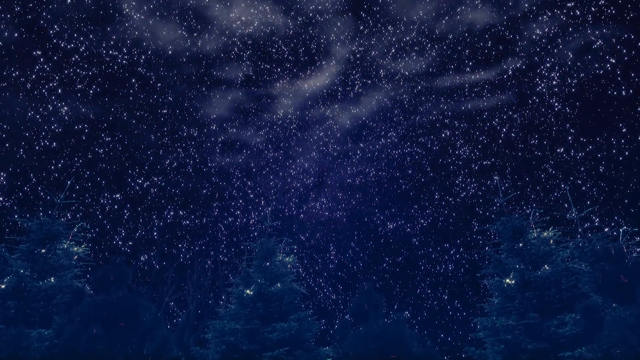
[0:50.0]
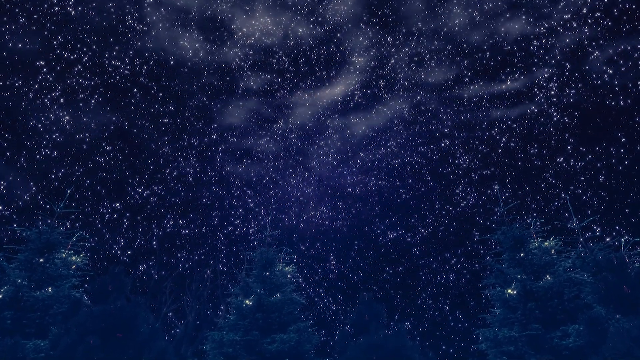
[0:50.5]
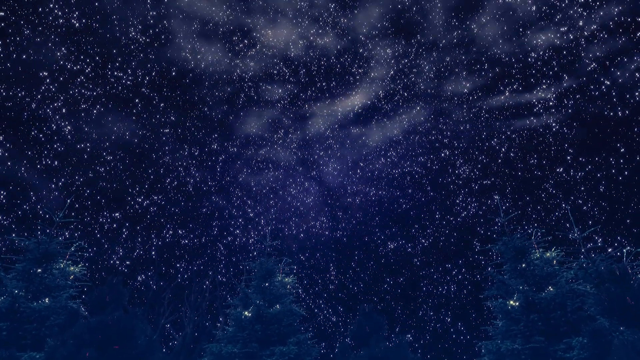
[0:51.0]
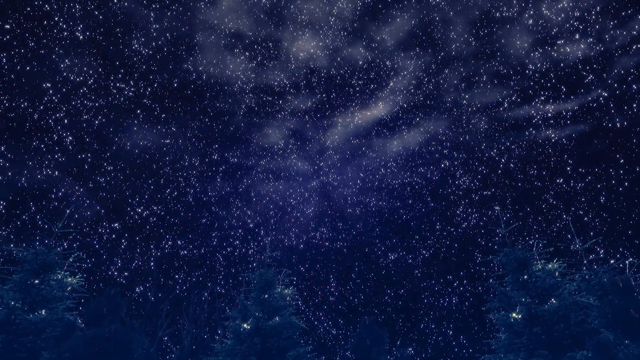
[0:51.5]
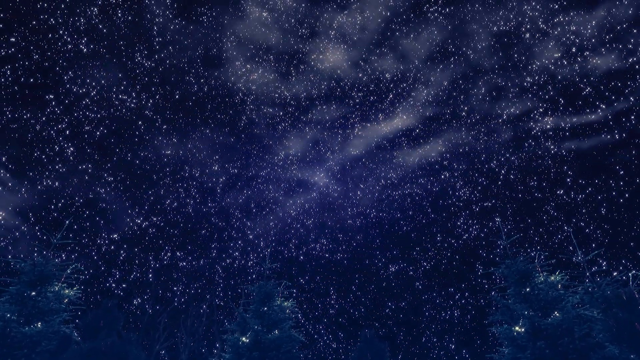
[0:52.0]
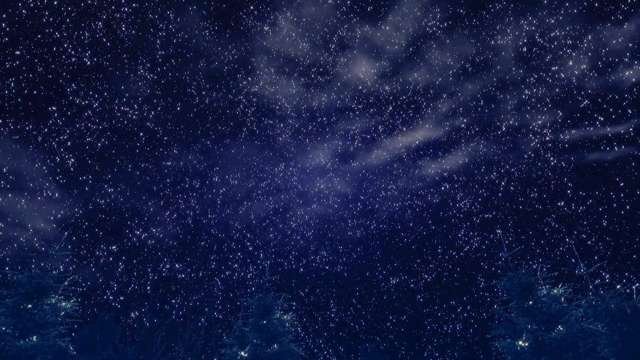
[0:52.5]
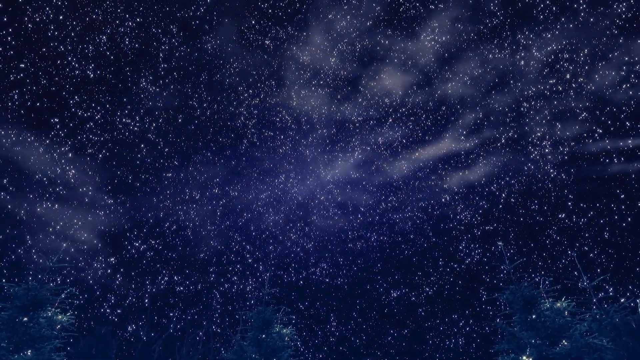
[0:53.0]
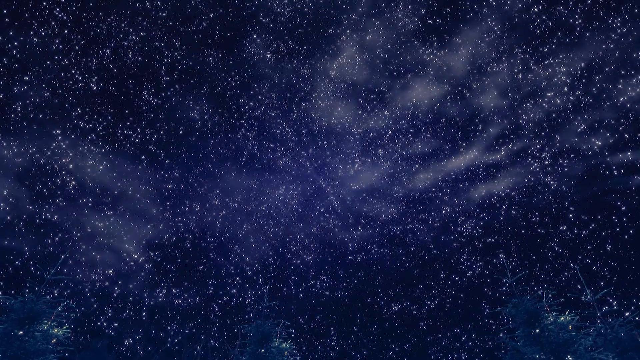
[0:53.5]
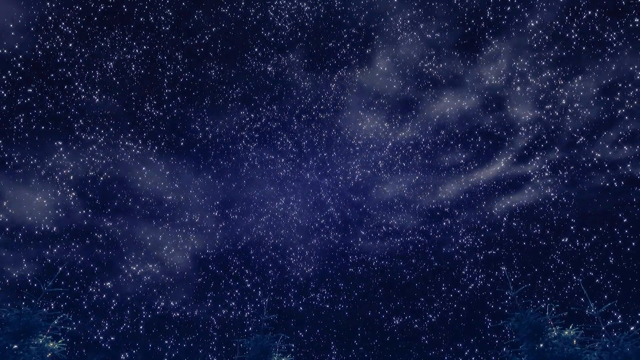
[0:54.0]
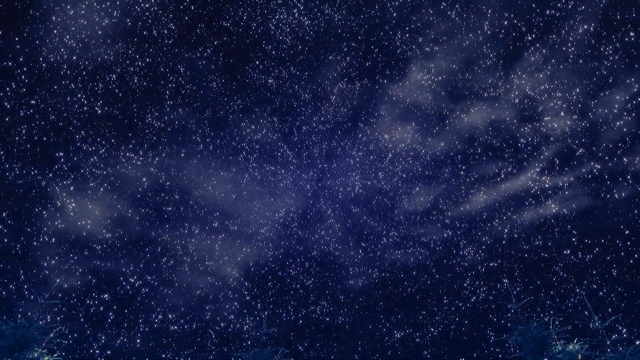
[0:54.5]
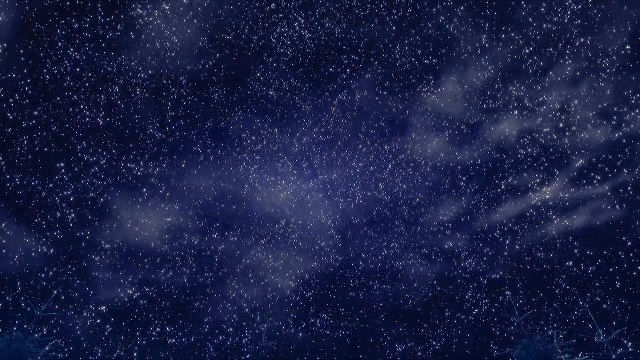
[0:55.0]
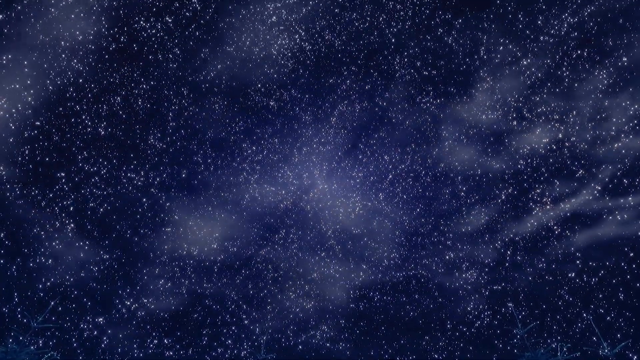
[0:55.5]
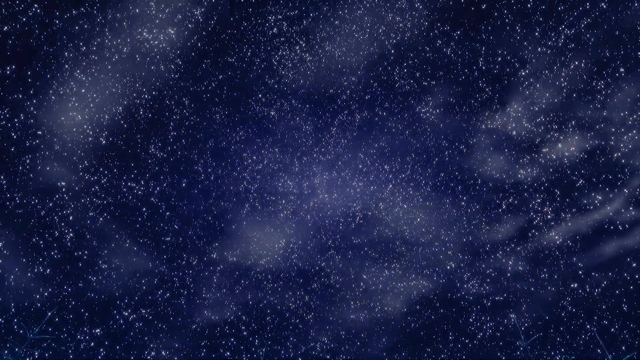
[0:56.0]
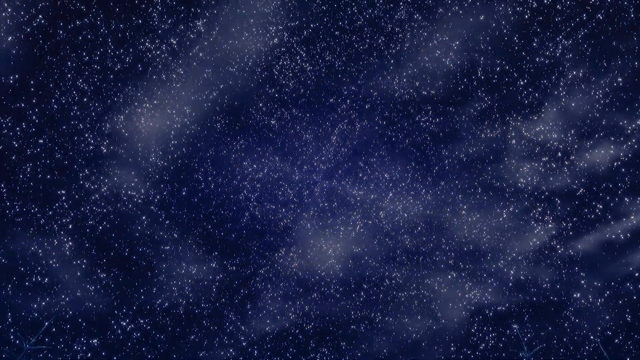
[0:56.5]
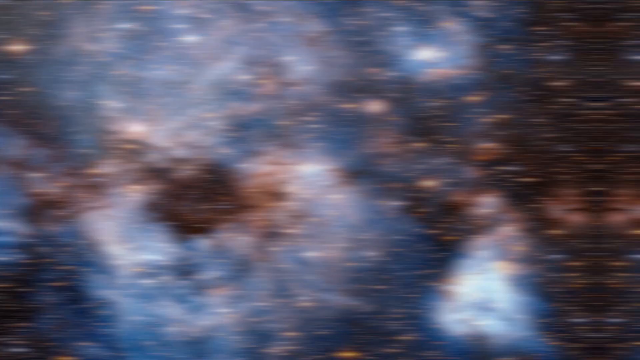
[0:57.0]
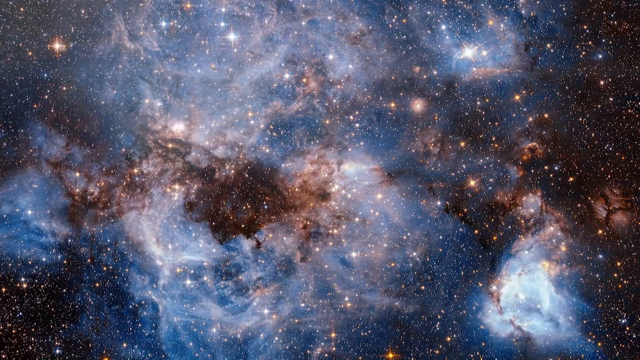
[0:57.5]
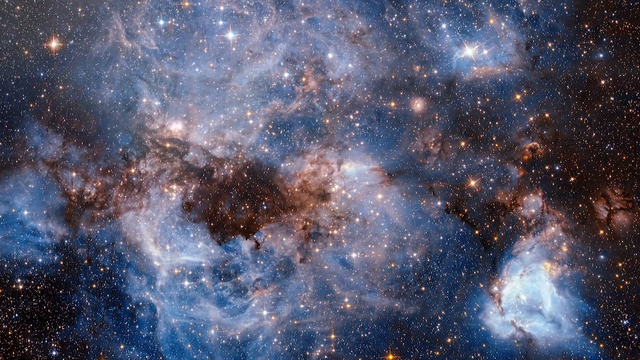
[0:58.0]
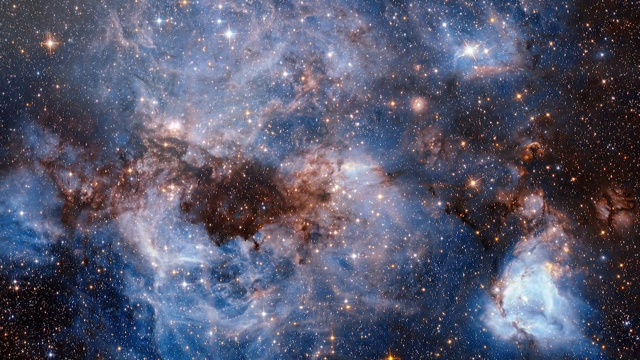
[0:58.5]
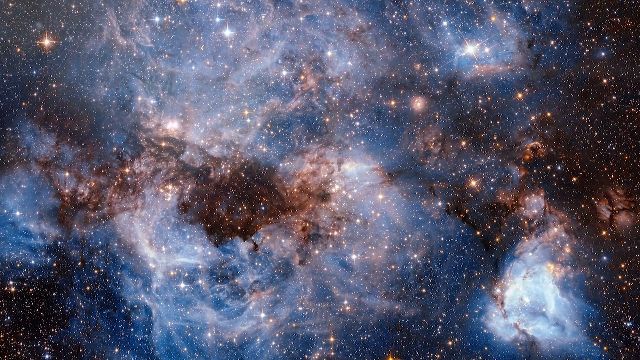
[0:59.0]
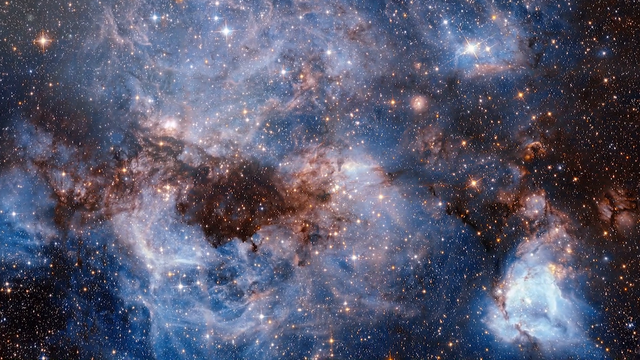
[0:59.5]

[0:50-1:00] The blue cobalt sky appears with swirling white clouds and white stars all over it. It then switches to a similar screen, but instead of blue it is more of a baby blue color, surrounded by many small bronze, white, and gold stars. It looks like a classic nebula spread all over the image, with almost thousands of stars. It has pieces of brown, white, and blue, almost like marble, the colors flowing into each other like looking into a glass marble; it almost looks like a geode. The image of deep space shows what is perhaps a large galaxy or solar system.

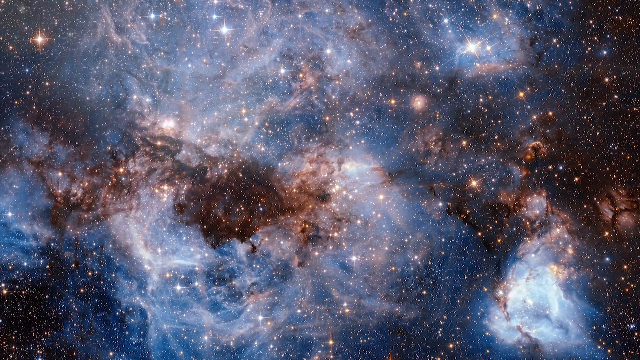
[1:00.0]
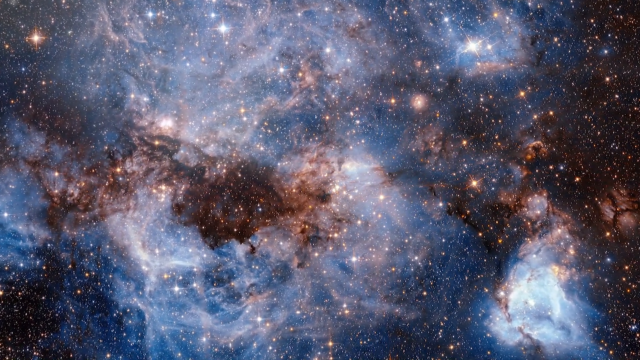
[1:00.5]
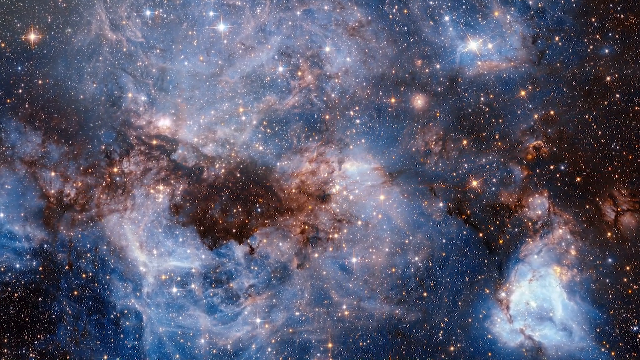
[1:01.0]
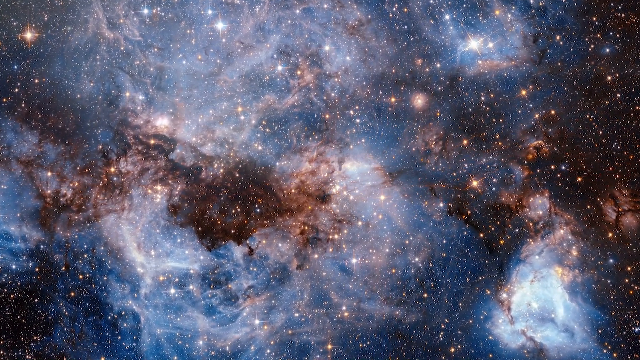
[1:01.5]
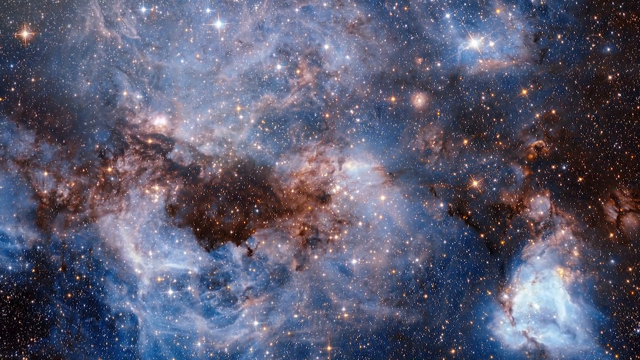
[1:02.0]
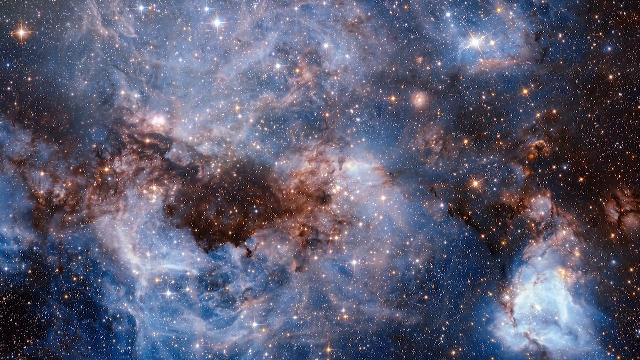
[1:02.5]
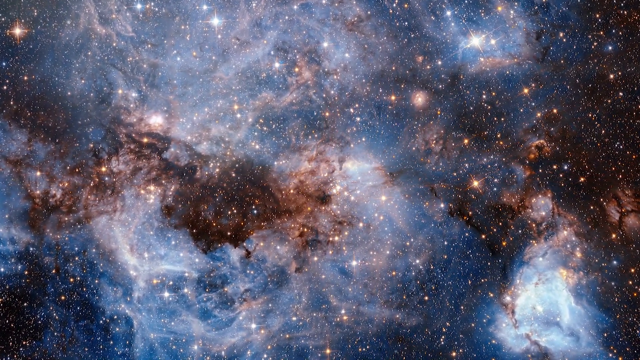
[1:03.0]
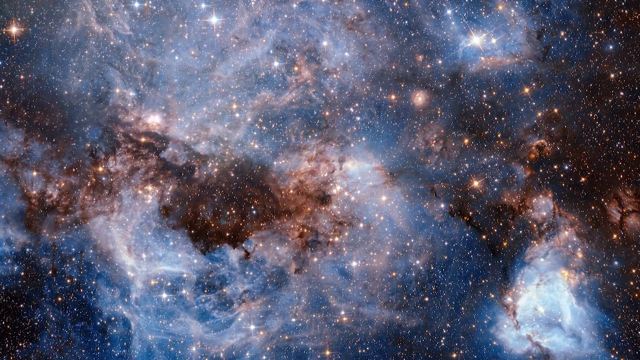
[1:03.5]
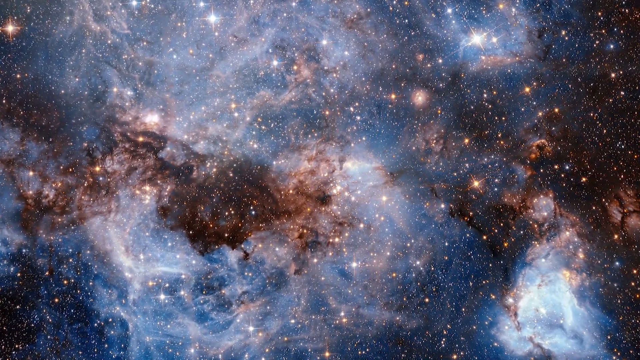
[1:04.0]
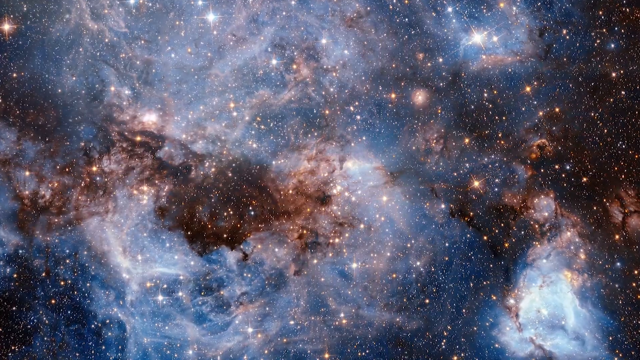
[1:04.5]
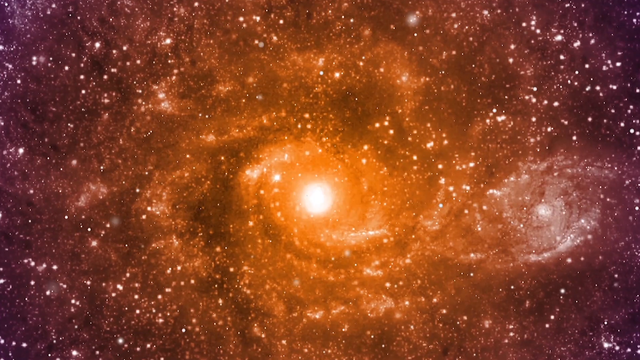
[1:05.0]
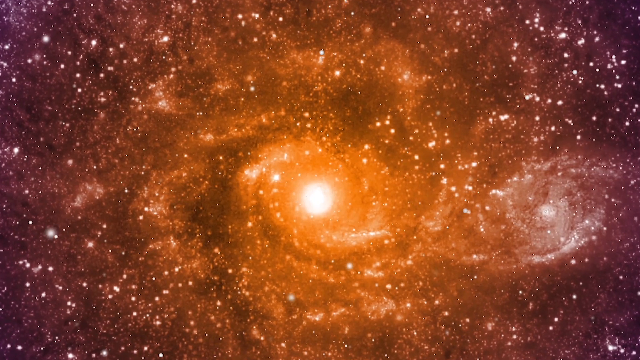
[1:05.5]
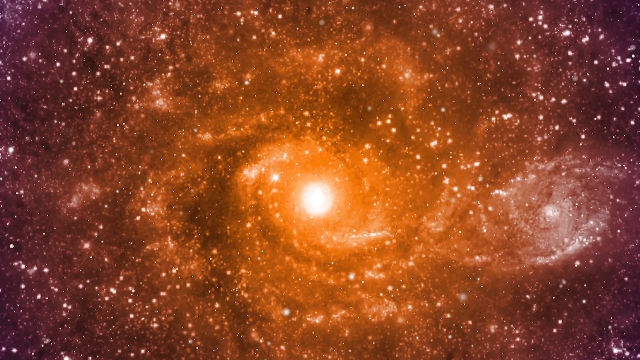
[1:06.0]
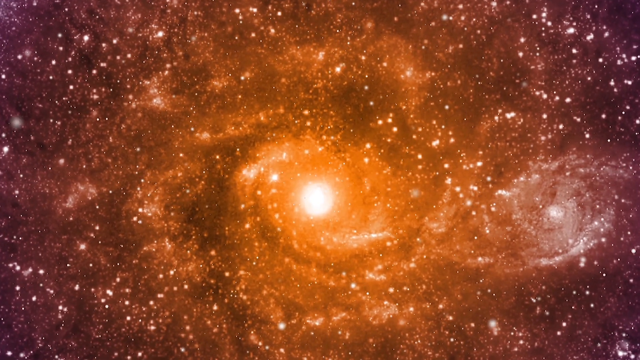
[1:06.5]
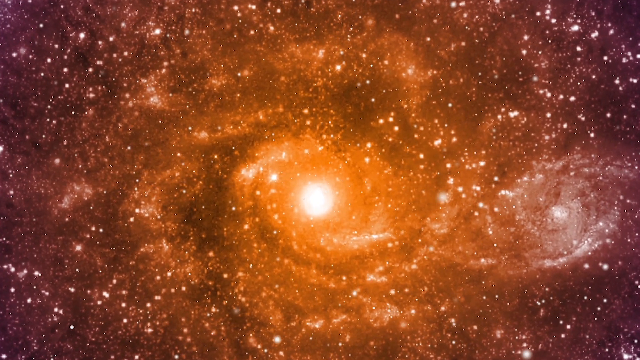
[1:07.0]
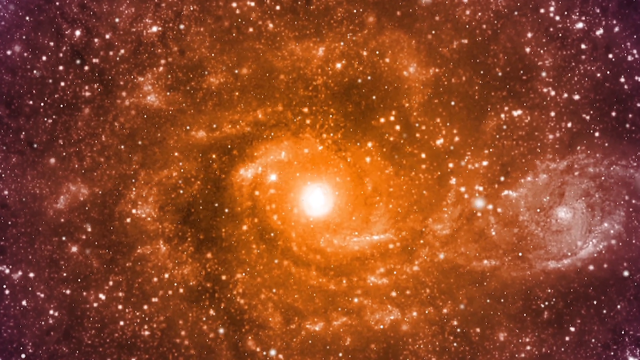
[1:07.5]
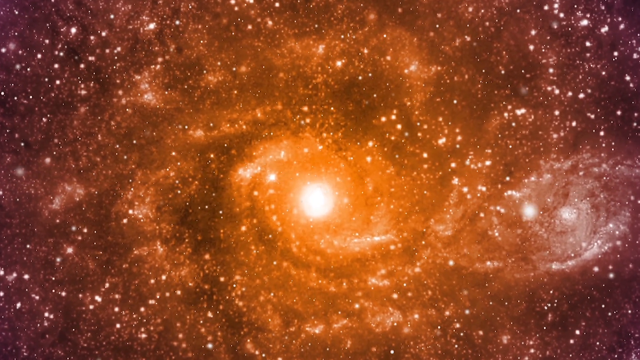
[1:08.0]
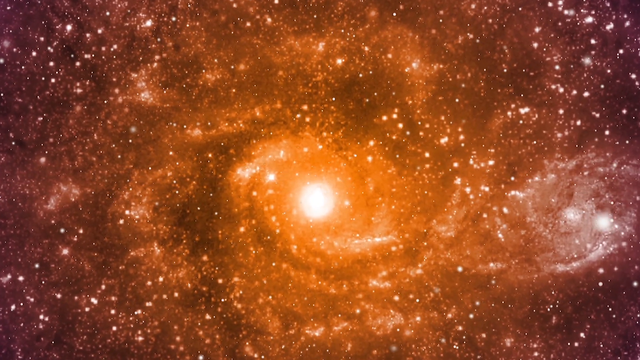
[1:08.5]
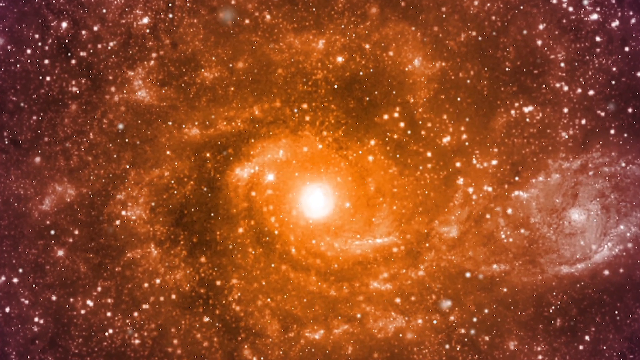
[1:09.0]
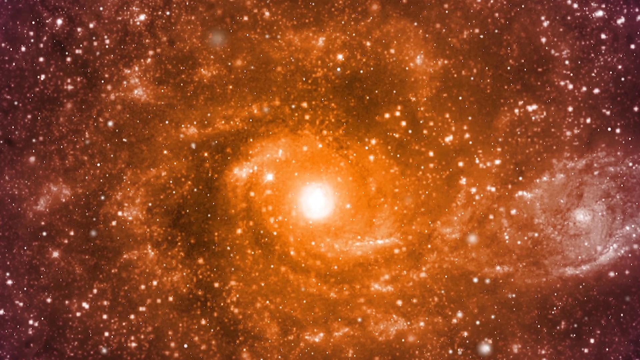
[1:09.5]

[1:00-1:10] A marble-looking piece of space in blue, white, and bronze switches to one that is orange and white. What almost looks like the sun or a very large star is at the center: a large white ball surrounded by orange fields that slowly gradient into a purplish-magenta color, almost like a tie-dye shirt. Many white stars are all around it, and vaguely visible rings around those stars almost look like solar systems, with almost several of these in the image. As the video goes on, the stars move through the image, as if flying through the field of stars in space.